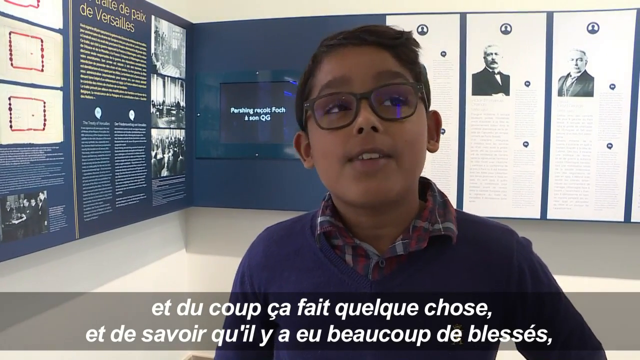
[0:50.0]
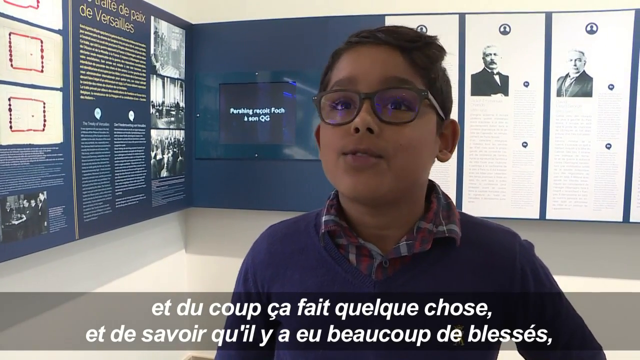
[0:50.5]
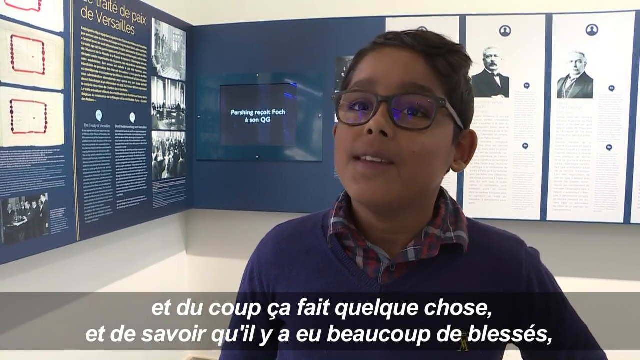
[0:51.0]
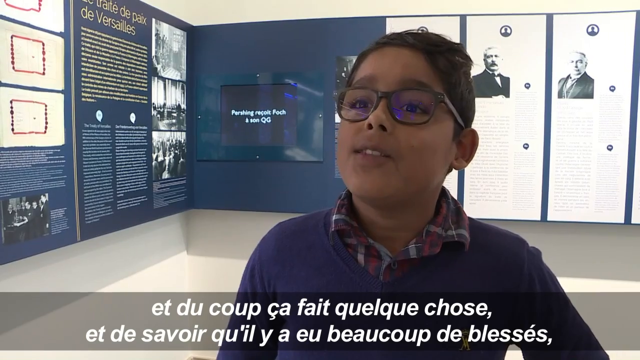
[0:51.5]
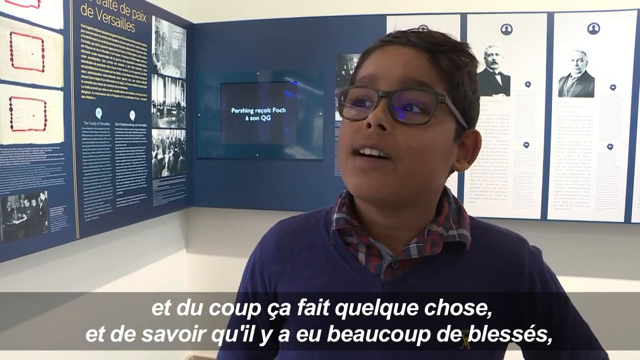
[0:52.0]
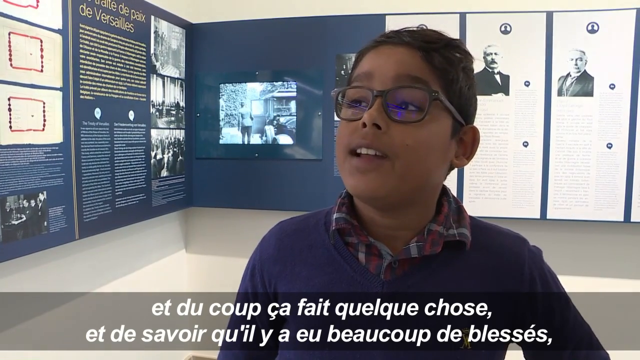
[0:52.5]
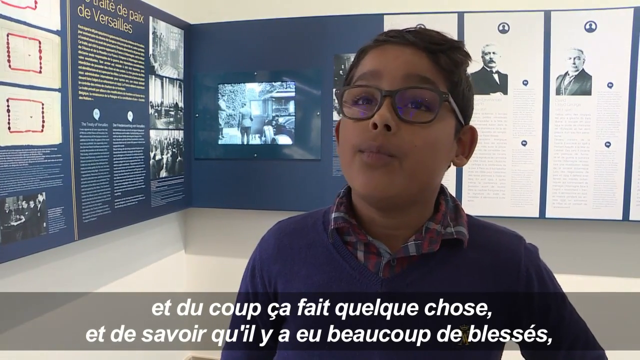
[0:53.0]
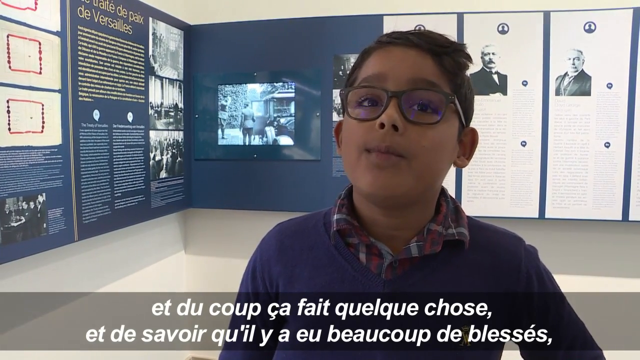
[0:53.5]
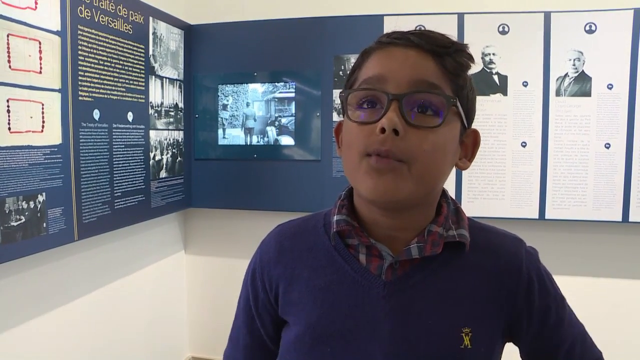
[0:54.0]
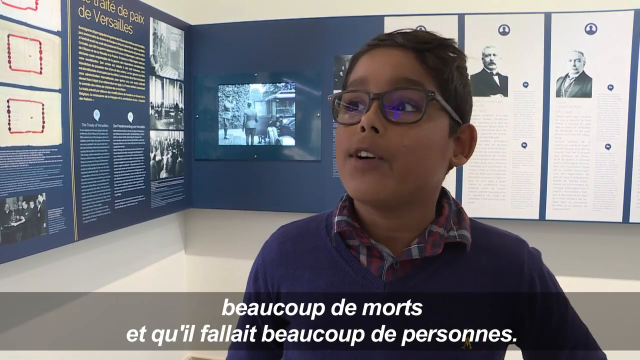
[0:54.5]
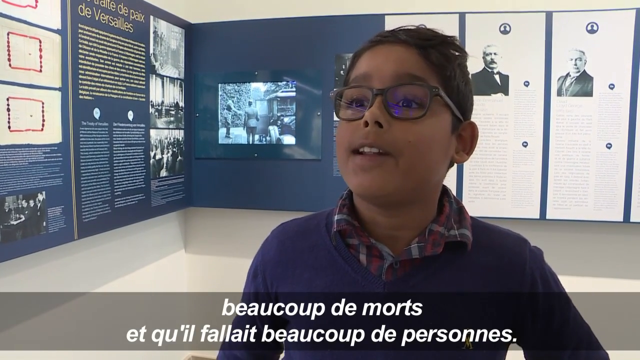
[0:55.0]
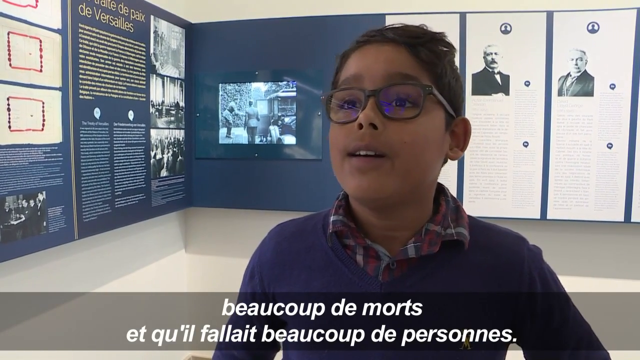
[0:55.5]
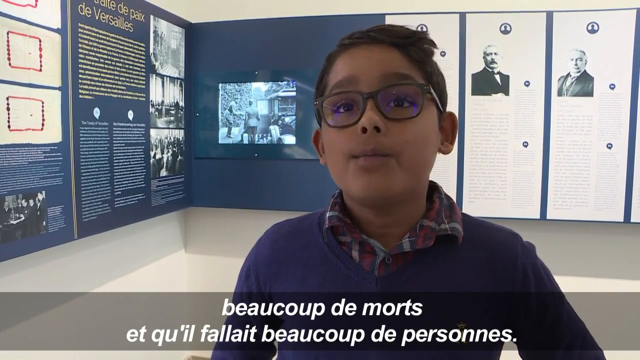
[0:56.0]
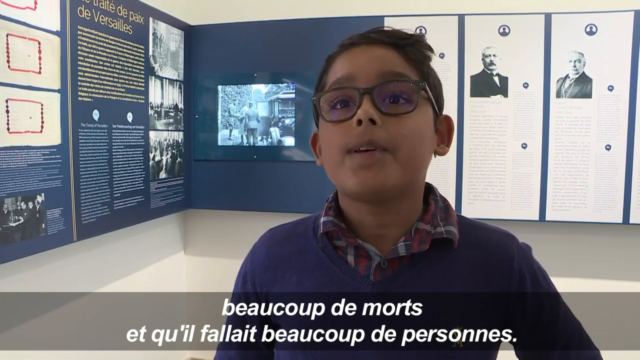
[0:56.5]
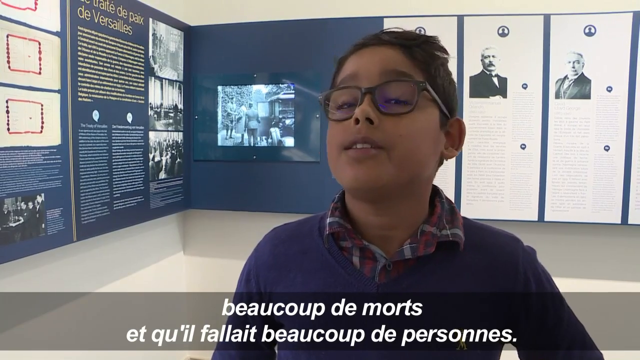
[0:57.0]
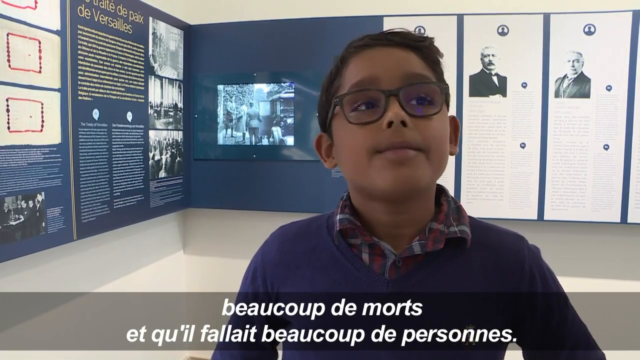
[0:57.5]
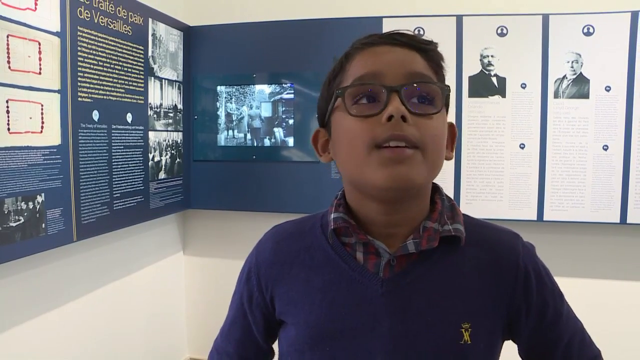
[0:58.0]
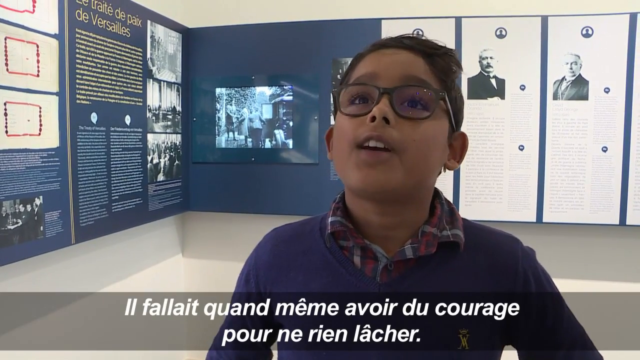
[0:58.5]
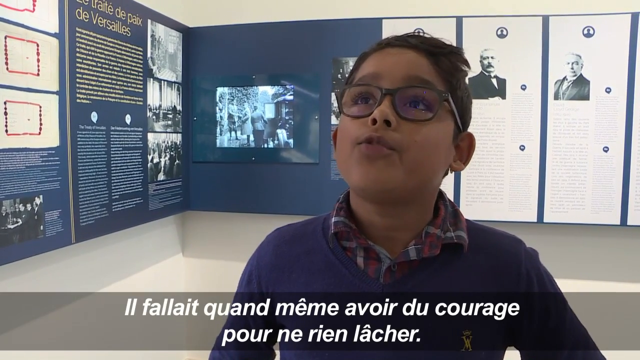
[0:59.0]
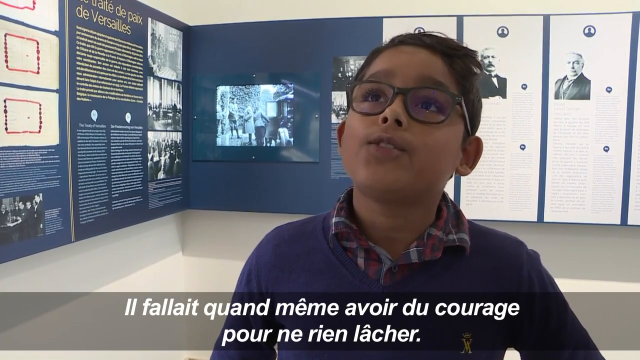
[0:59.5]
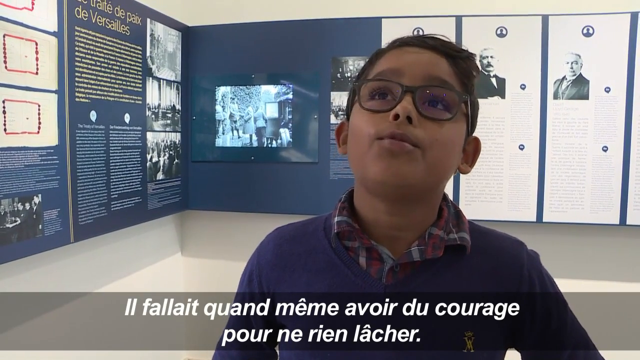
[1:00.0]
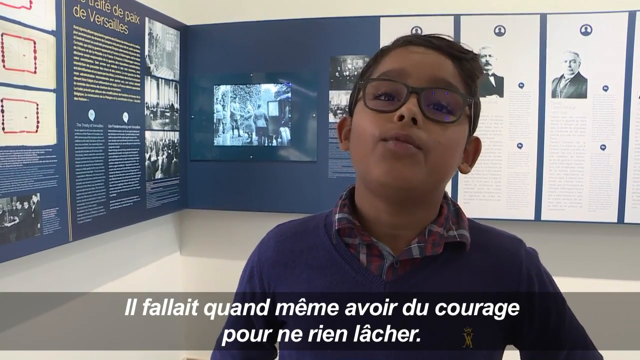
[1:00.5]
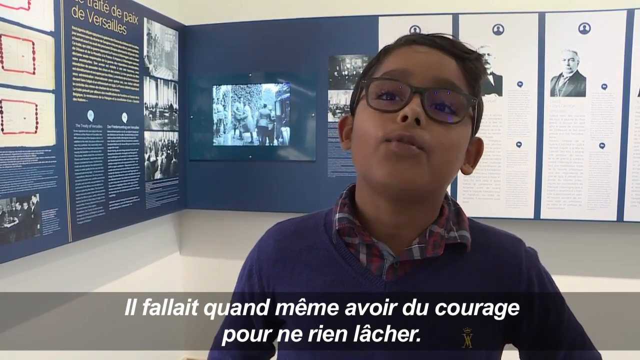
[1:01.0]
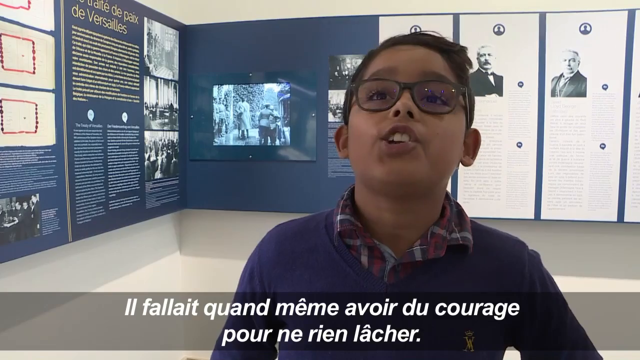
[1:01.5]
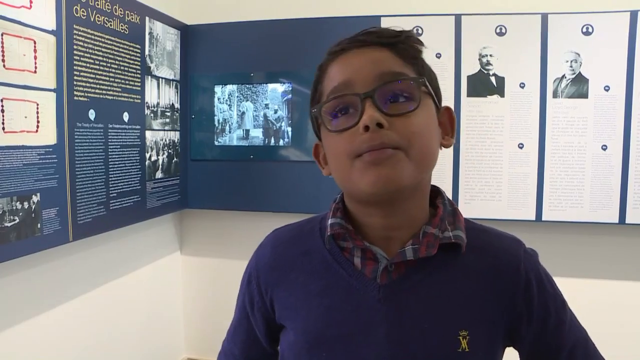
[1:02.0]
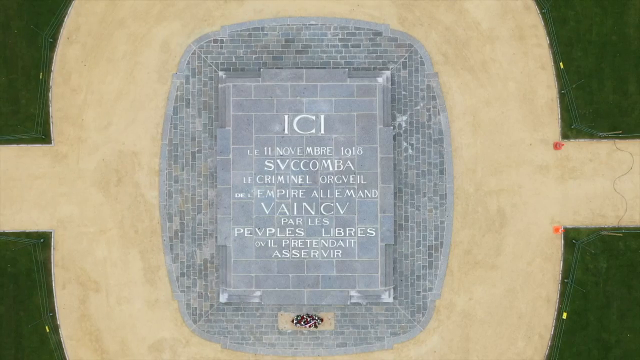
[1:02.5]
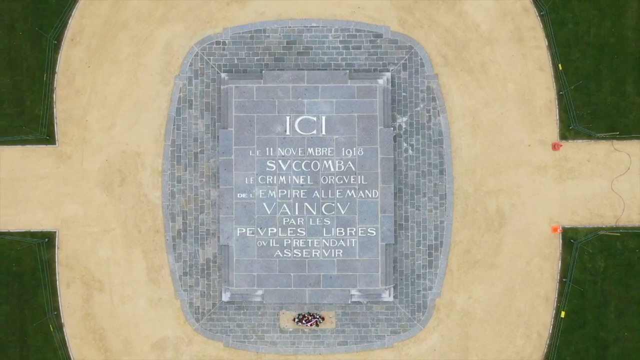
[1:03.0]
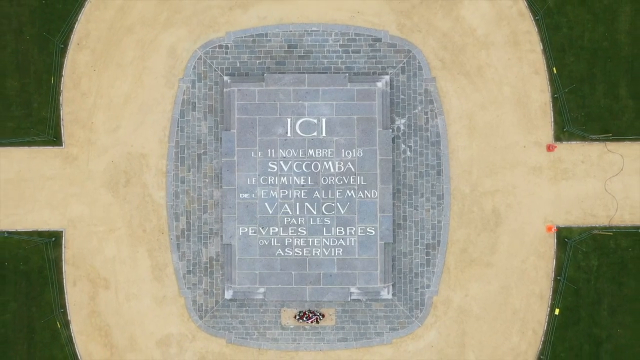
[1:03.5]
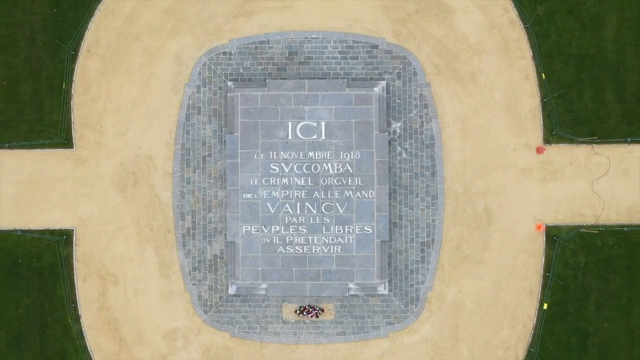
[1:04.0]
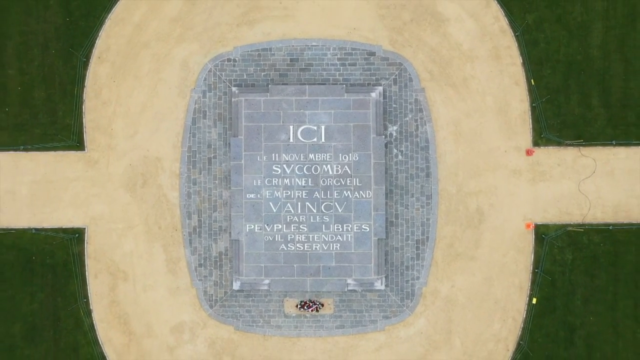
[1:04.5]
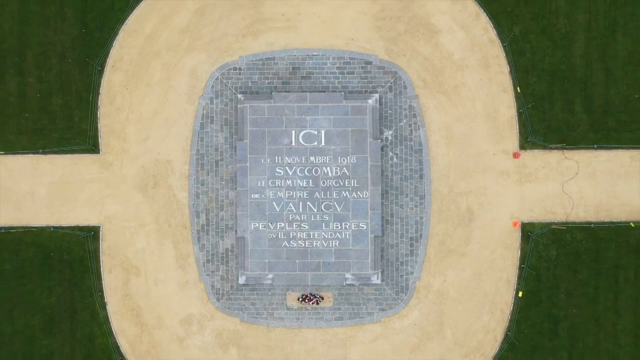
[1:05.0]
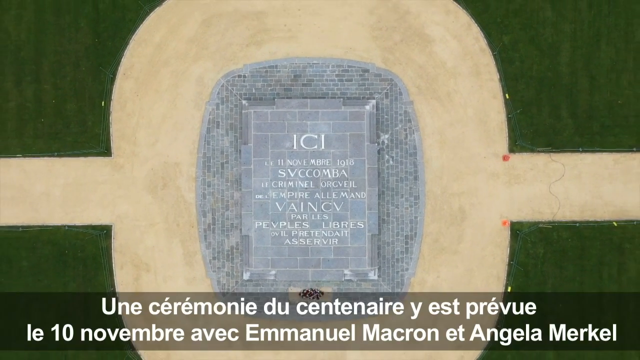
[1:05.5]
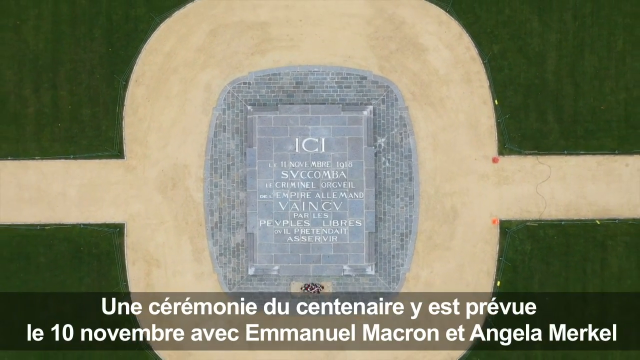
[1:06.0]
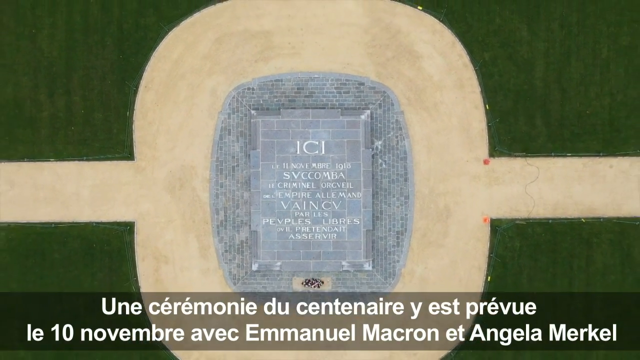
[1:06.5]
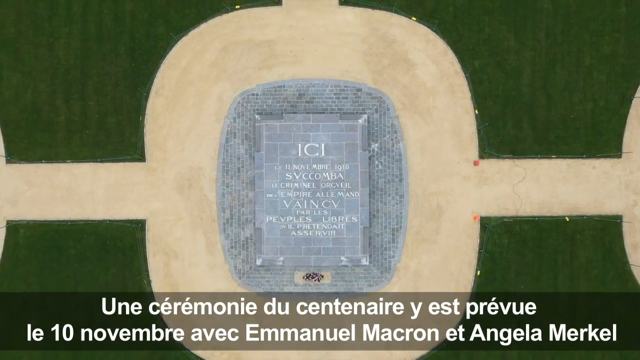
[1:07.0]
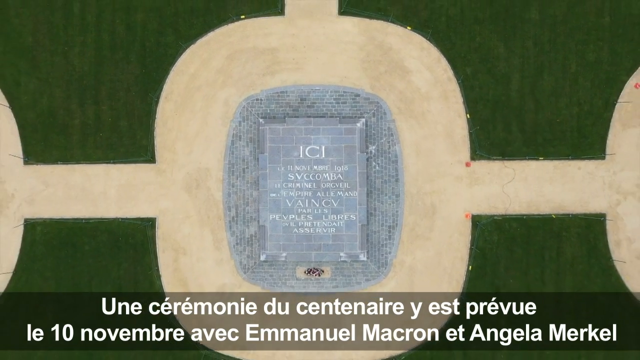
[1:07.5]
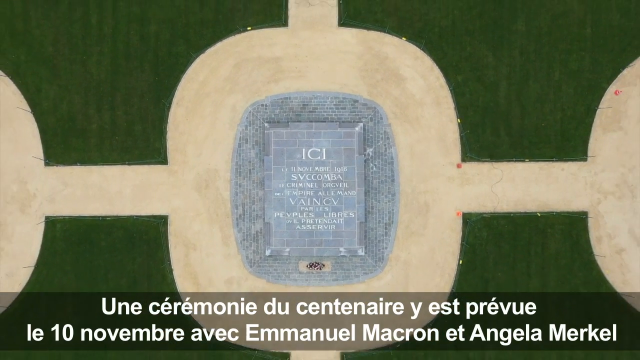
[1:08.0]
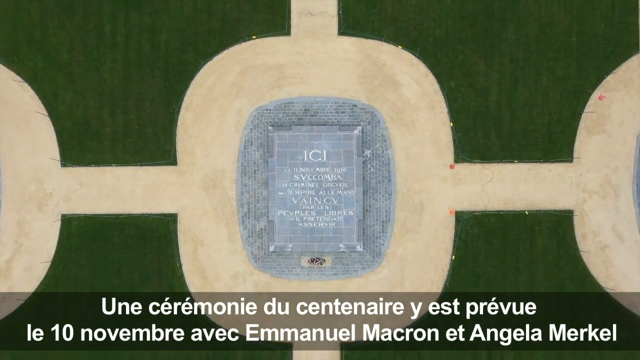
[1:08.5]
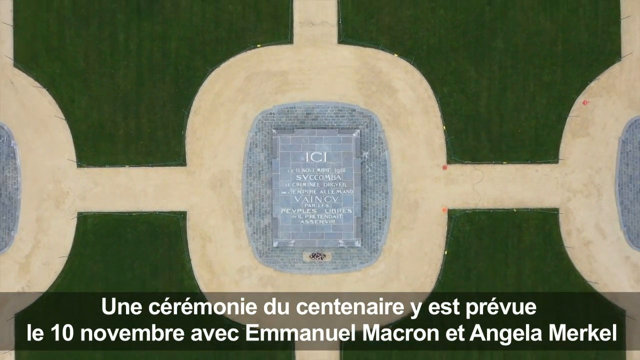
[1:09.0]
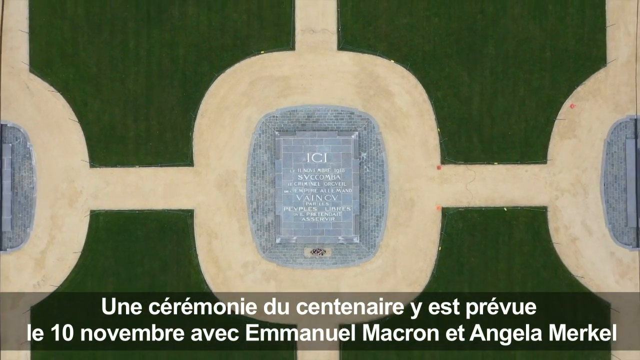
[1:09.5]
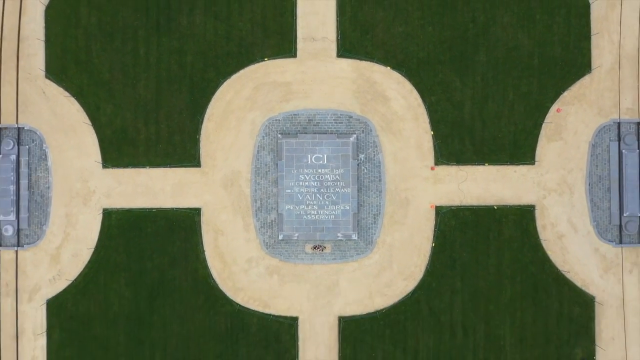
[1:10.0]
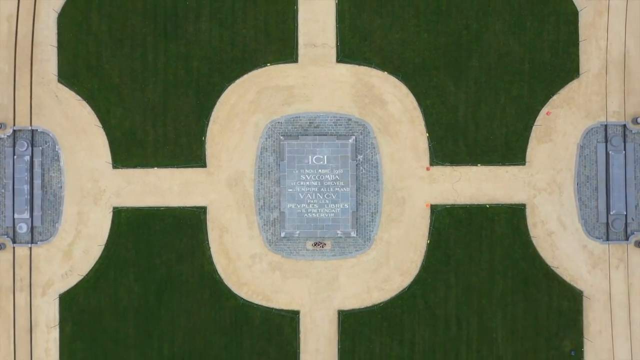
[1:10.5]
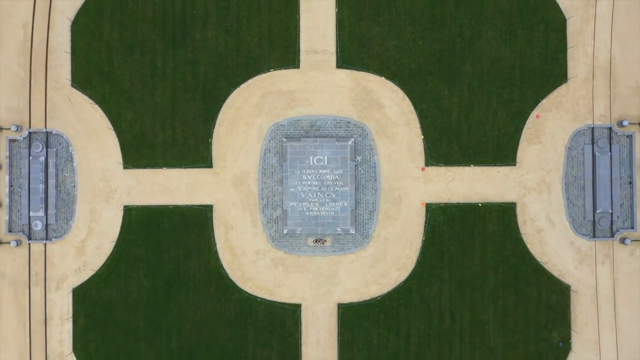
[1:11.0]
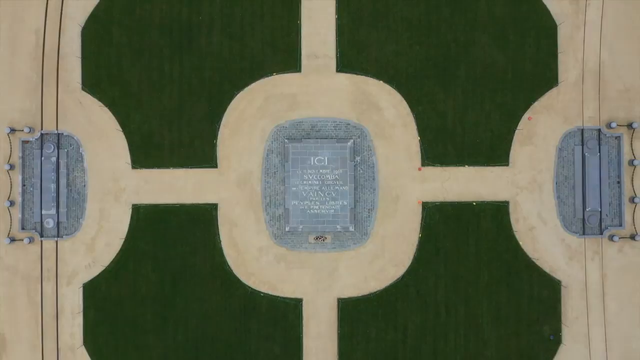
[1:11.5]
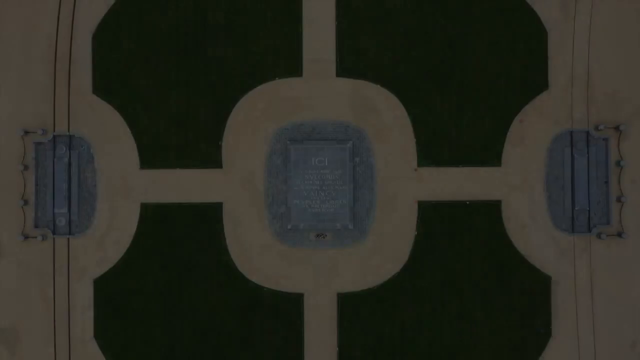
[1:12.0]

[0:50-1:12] The young French tourist, Gabrielle Lous Waters, talks inside the museum. He also says "Il fallait quand même avoir du courage pour ne rien lâcher." Behind him is a moving screen showing black and white footage of a gentleman getting out of a car and shaking hands, and posters on the back wall show black and white photographs of distinguished men. The video then switches to the area at the front of the museum: an oval shape with a path from each side of the grass leading to it. The stone in the centre bears the inscription 'Here on 11 November 1918 succumbed the criminal pride of the German Empire, defeated by the free peoples it claimed to enslave'. The camera then fades backwards, and on-screen text appears beginning "Une cérémonie" and saying "est prévue le 10 novembre avec Emmanuel Macron et Angela Merkel".